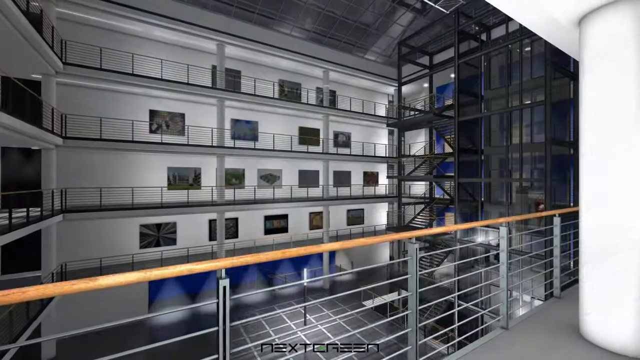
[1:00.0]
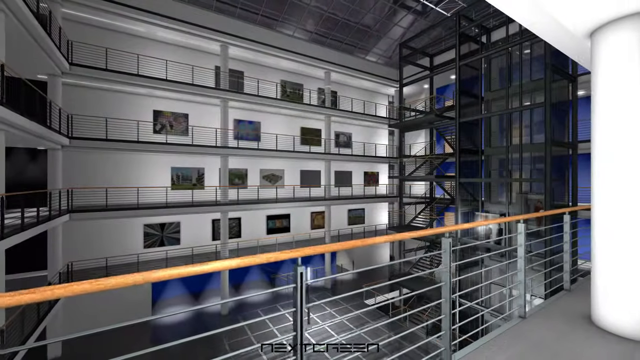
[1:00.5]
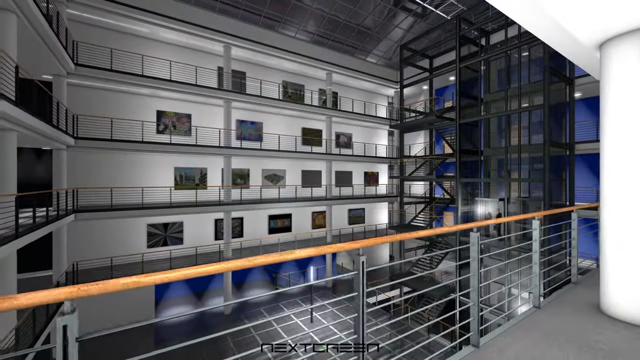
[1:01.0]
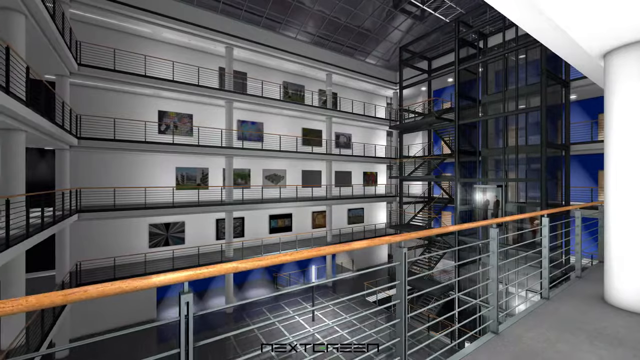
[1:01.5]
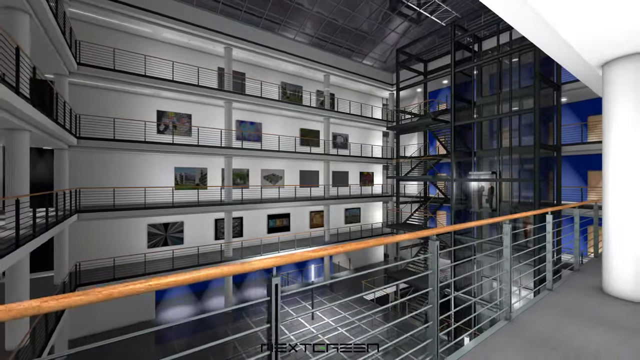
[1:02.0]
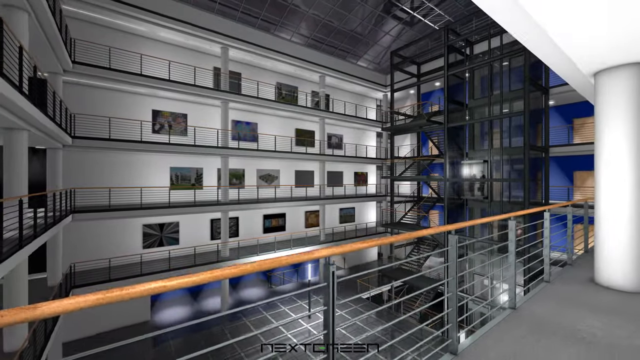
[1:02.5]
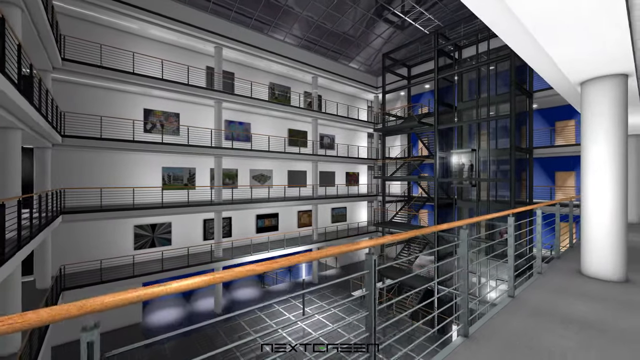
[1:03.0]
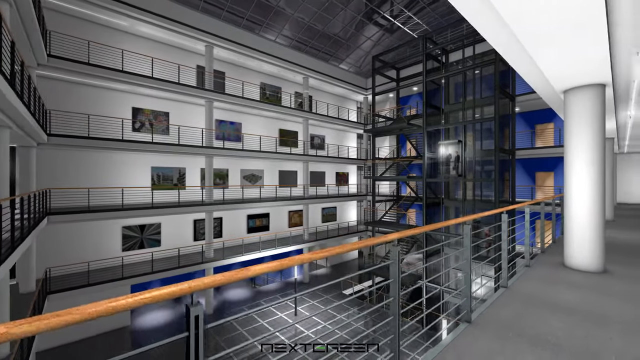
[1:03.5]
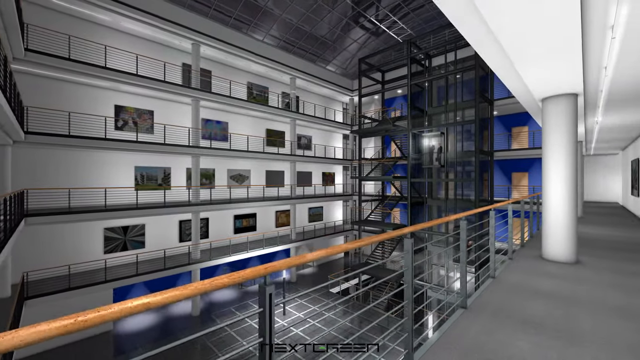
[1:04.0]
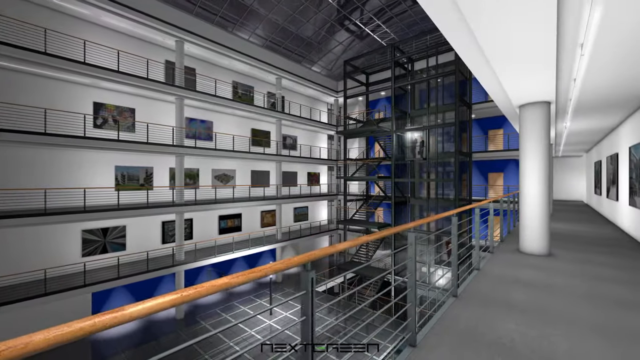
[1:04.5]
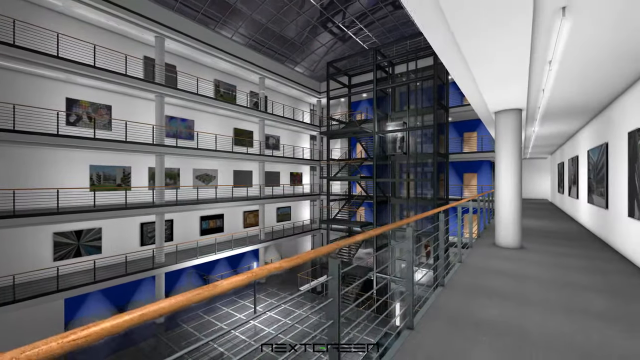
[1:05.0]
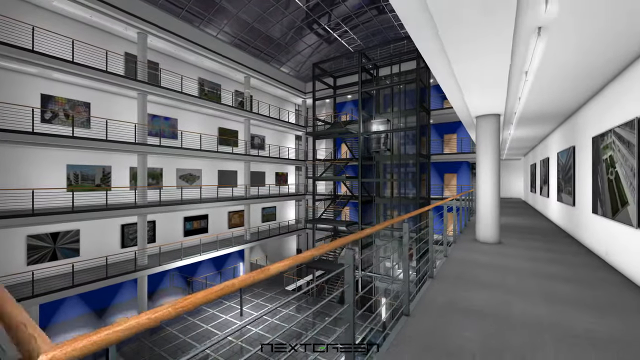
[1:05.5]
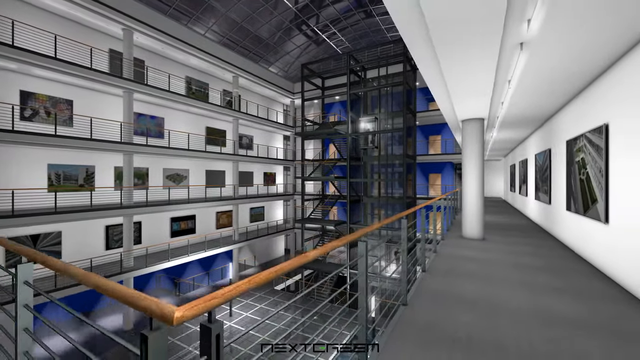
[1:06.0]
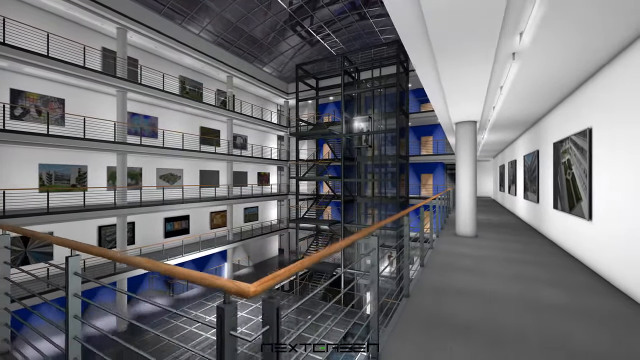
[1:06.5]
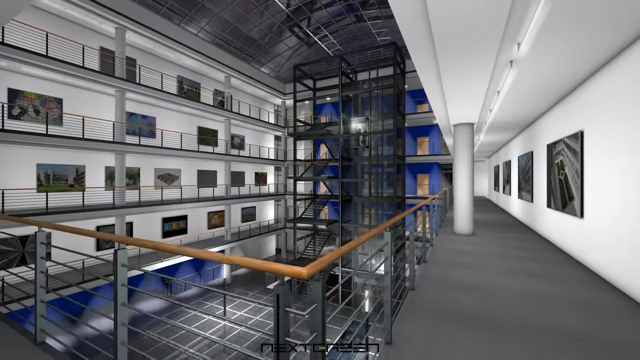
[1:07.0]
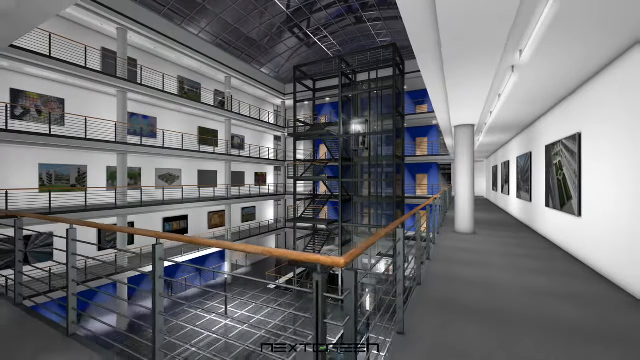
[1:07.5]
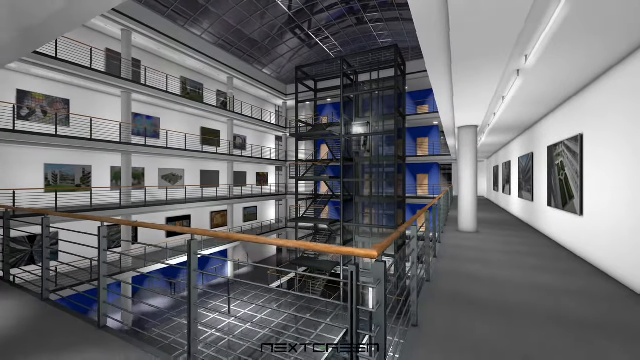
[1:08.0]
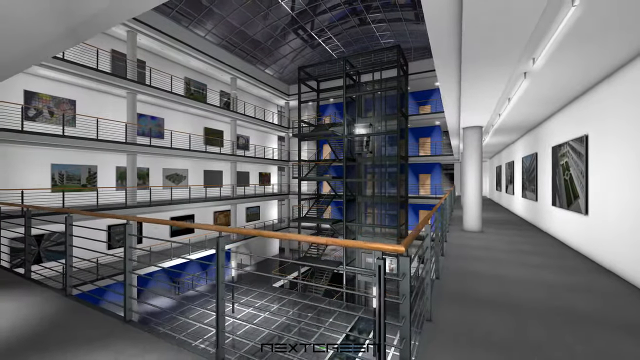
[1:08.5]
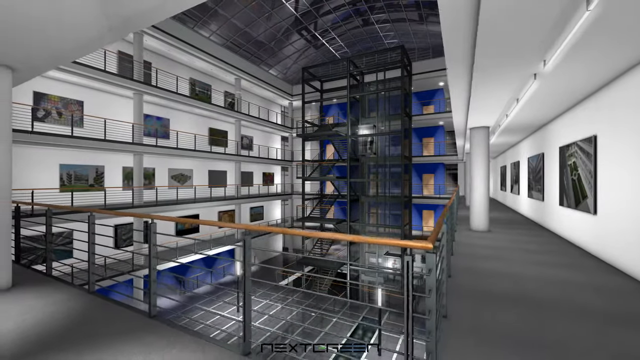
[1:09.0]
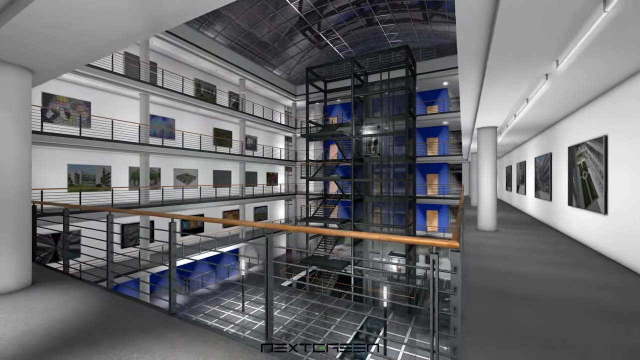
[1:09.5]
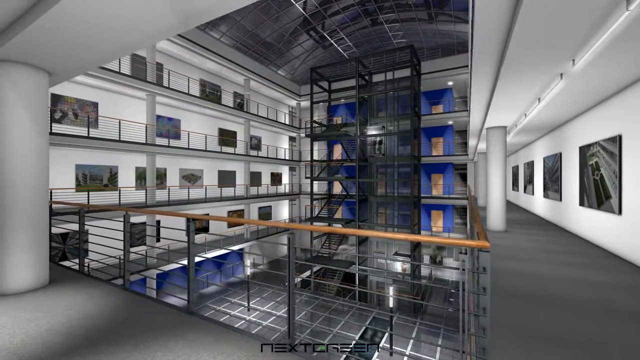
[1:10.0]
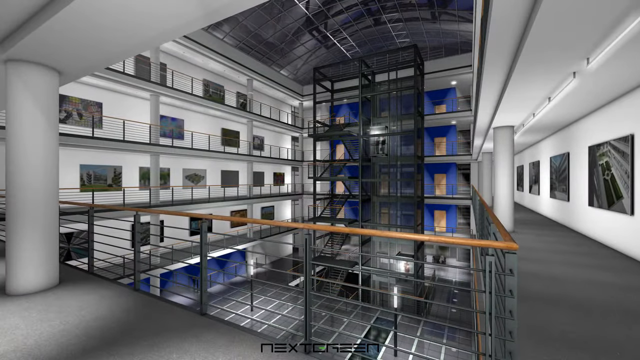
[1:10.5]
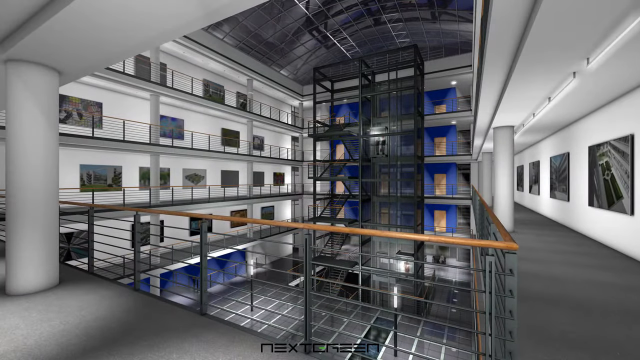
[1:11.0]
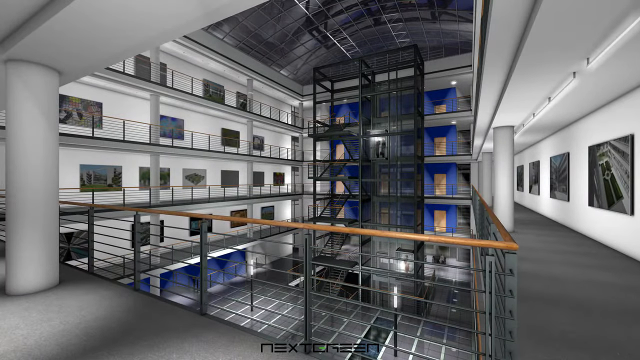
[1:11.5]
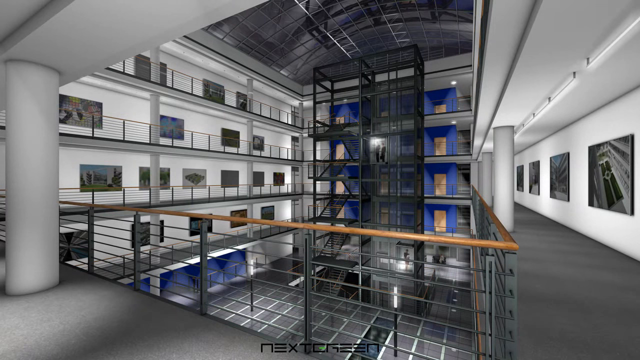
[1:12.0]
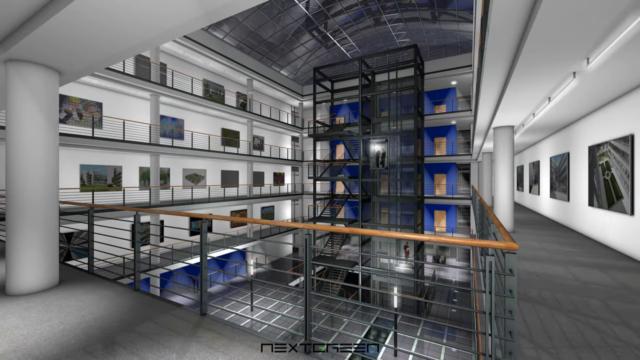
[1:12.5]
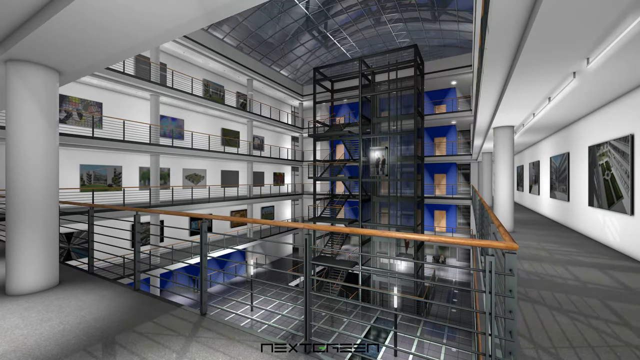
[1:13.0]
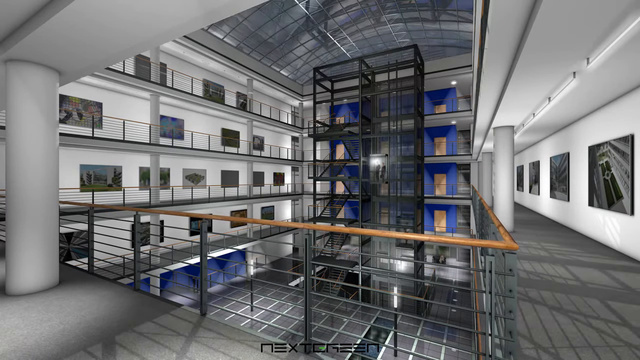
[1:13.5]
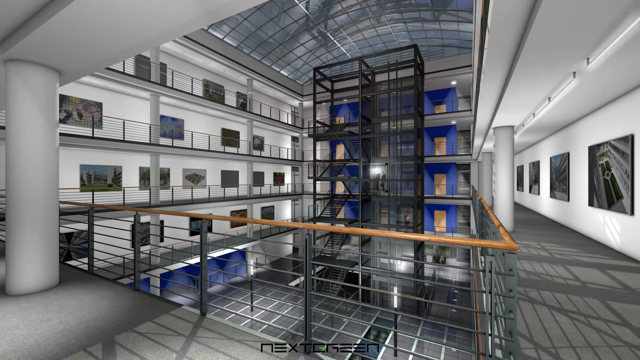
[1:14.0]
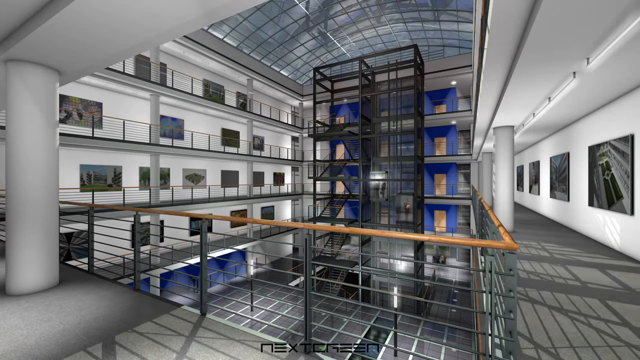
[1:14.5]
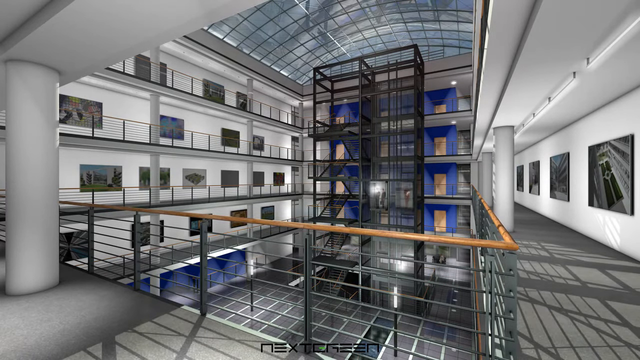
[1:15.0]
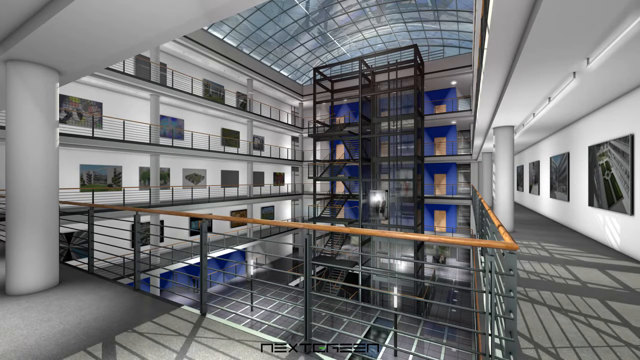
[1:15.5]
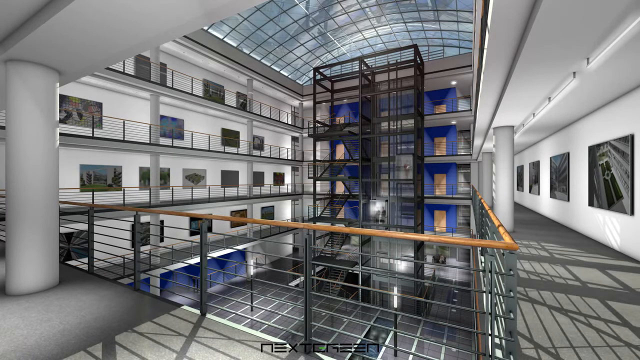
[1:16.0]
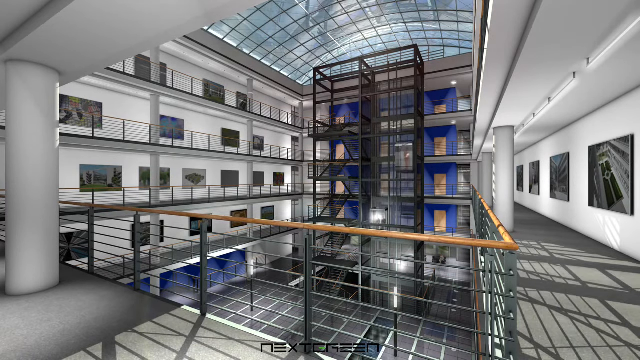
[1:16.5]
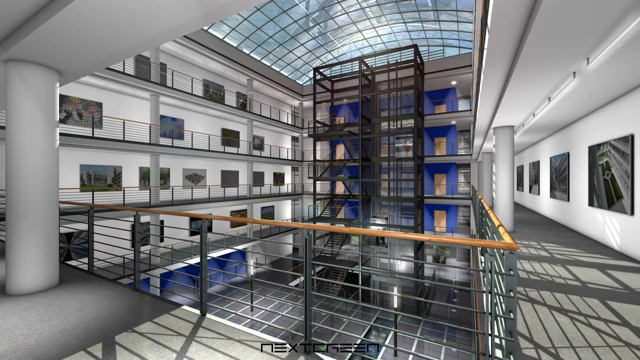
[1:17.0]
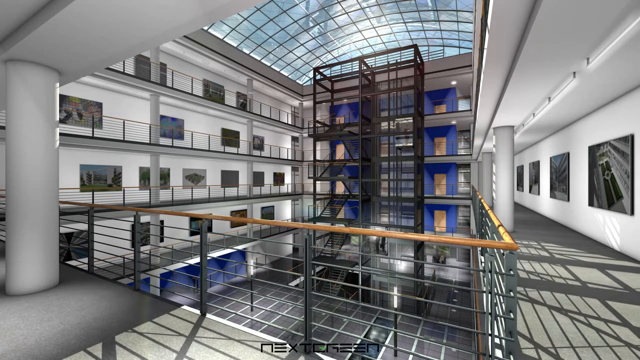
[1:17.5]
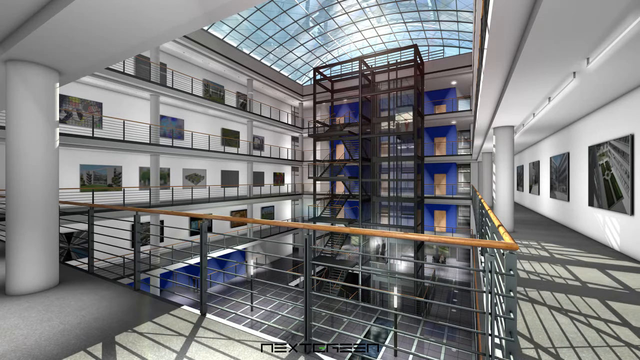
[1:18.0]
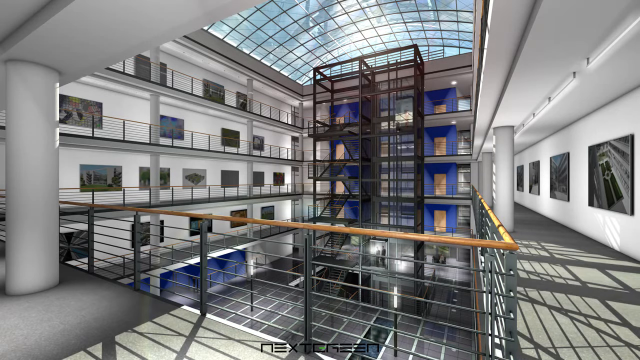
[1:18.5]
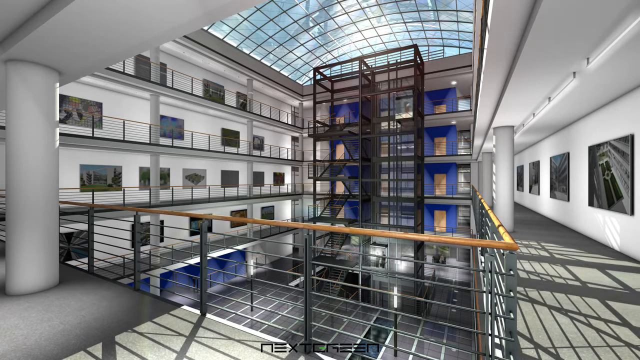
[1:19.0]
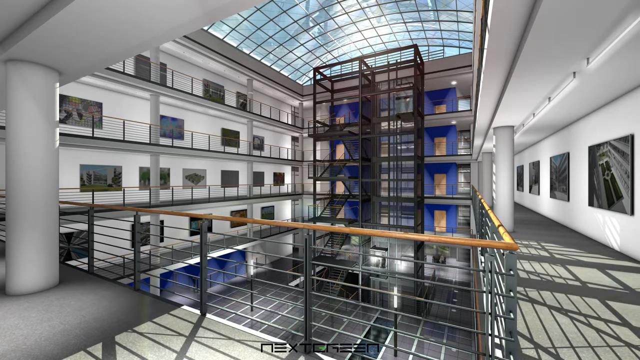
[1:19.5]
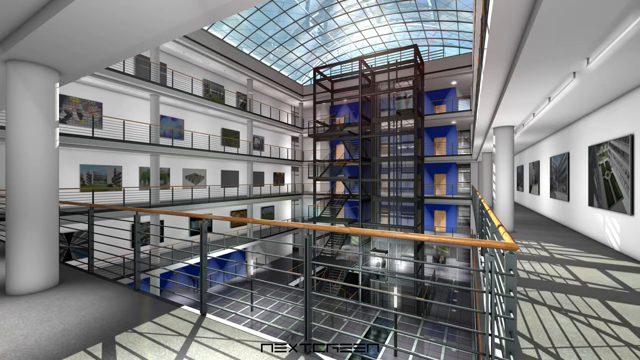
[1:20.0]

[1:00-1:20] On the ground floor, spotlights shine down on tables and other things against a blue wall. The view returns to the perspective of someone on the third floor. It is night, and the camera kind of pans down the walkway and returns to facing the elevator, making clear that the perspective is from the third floor.